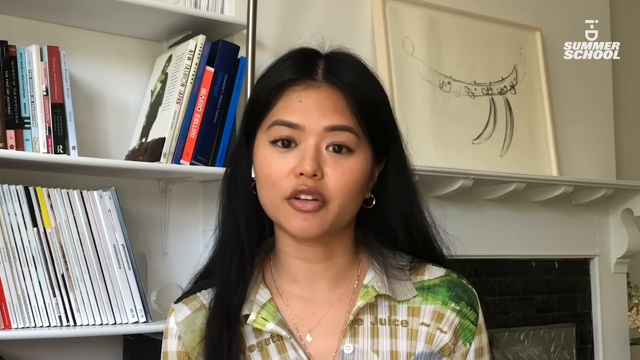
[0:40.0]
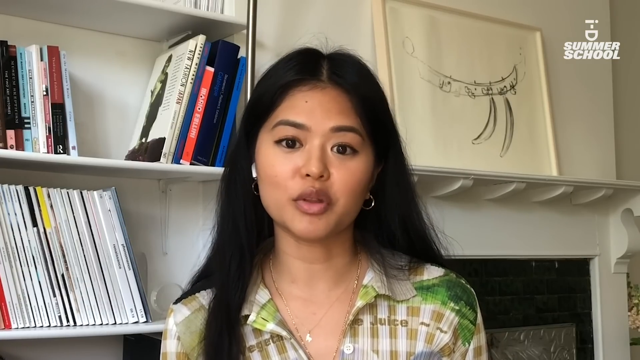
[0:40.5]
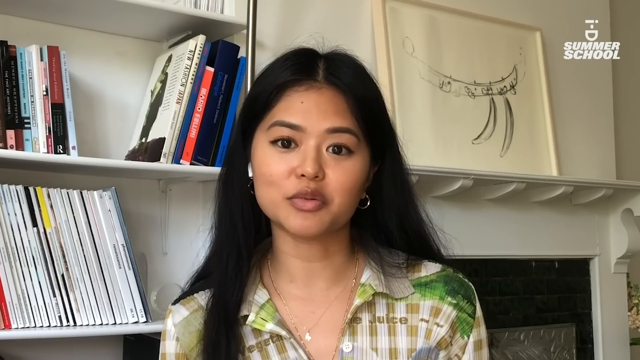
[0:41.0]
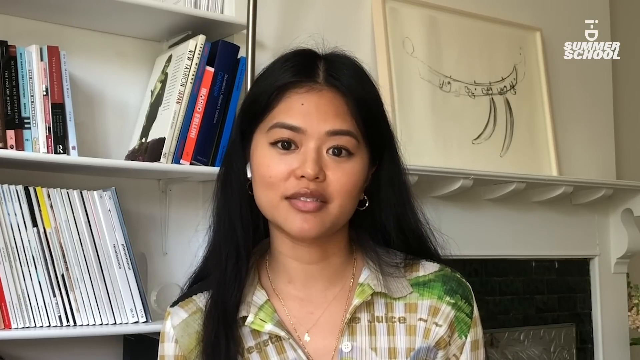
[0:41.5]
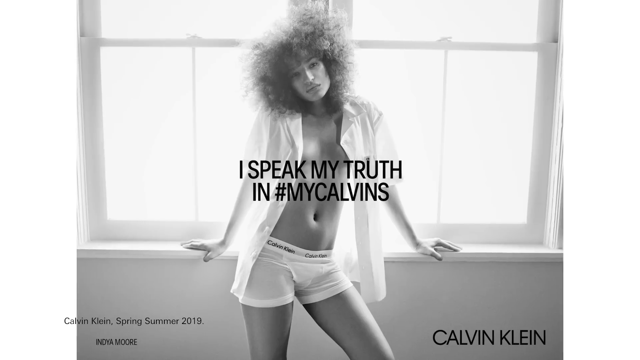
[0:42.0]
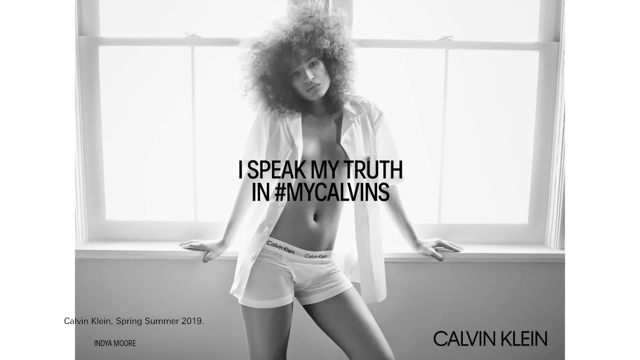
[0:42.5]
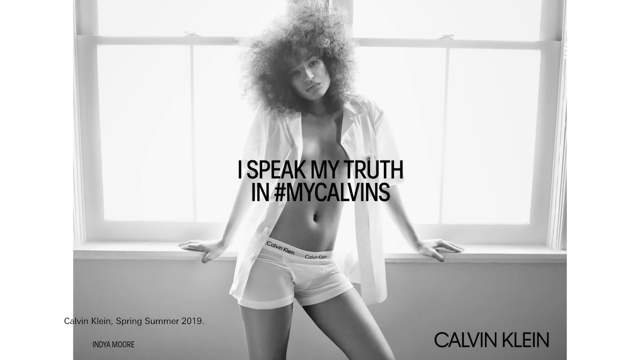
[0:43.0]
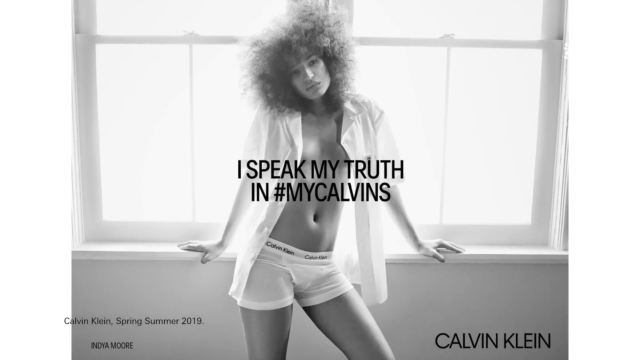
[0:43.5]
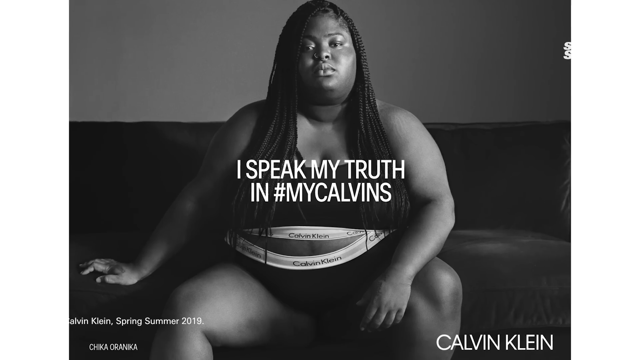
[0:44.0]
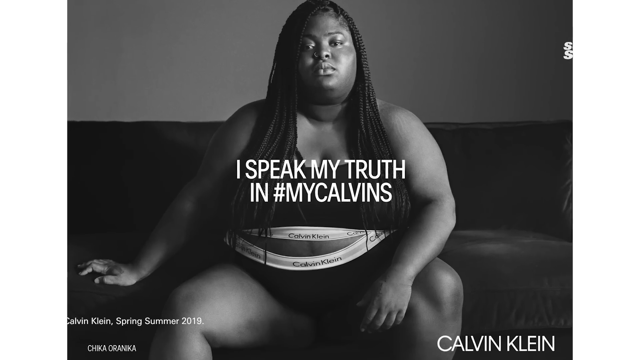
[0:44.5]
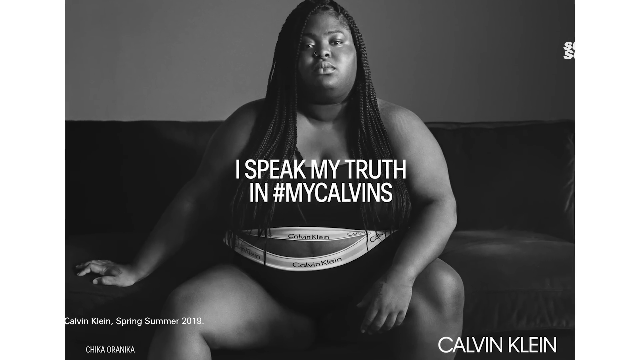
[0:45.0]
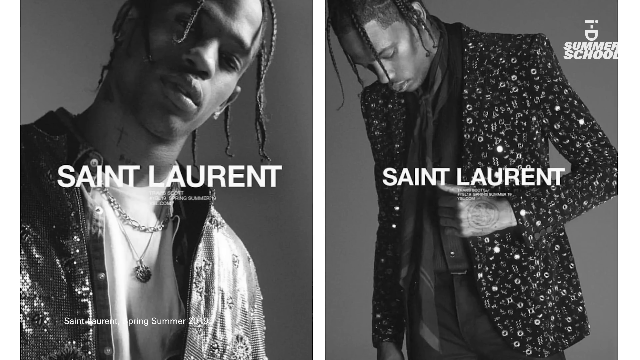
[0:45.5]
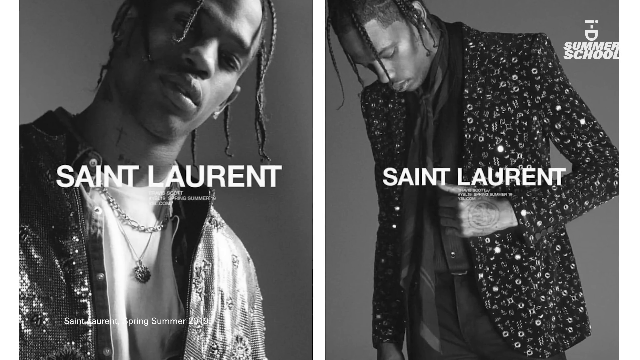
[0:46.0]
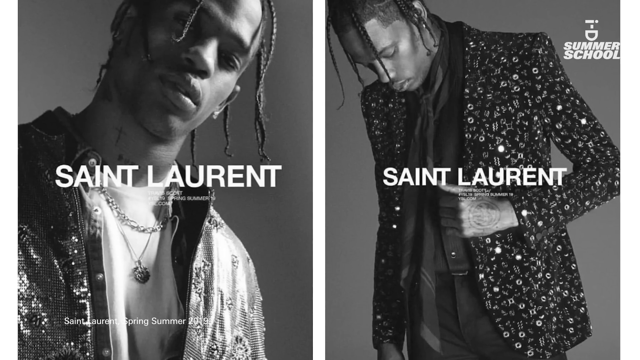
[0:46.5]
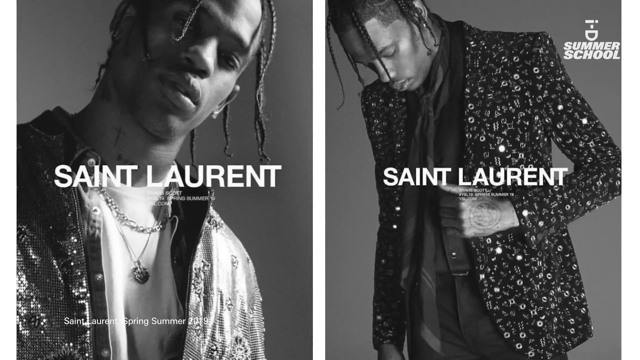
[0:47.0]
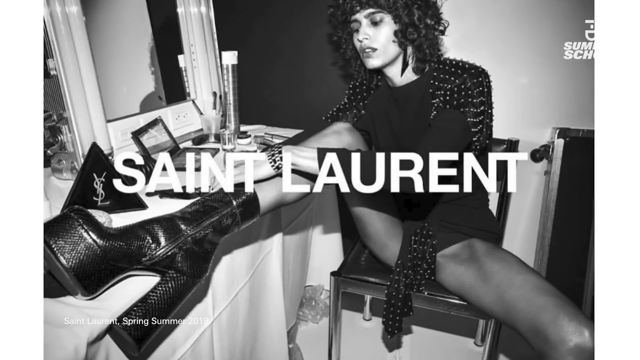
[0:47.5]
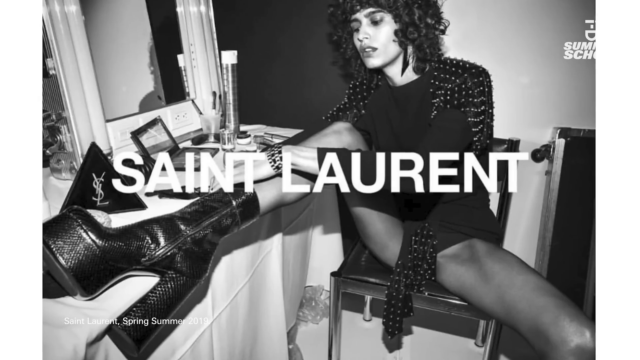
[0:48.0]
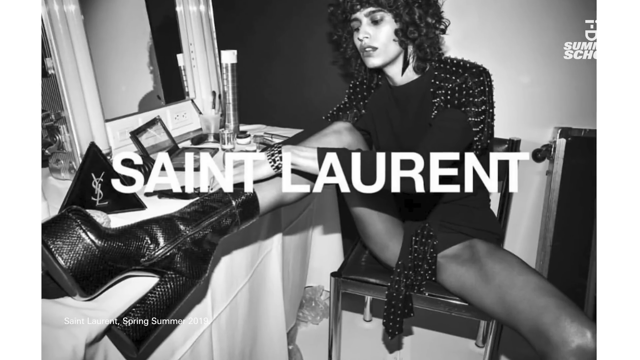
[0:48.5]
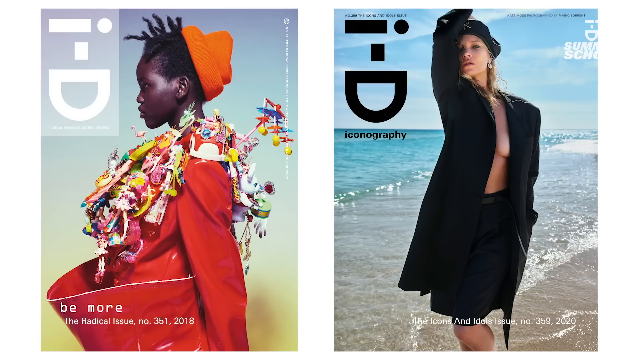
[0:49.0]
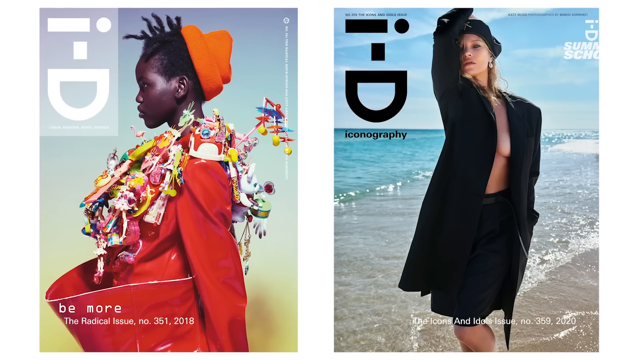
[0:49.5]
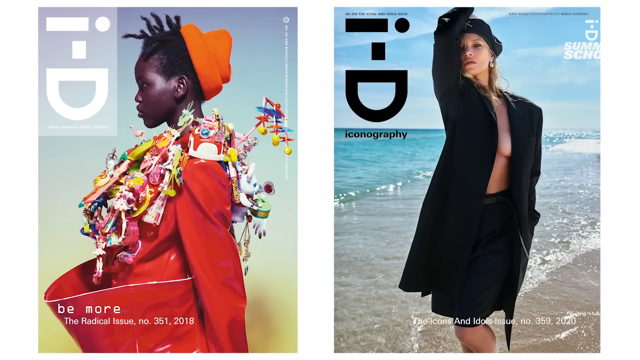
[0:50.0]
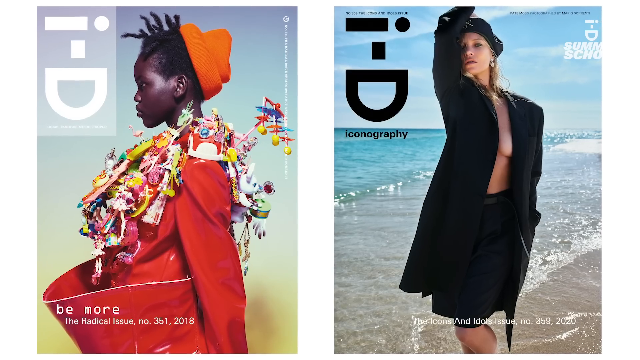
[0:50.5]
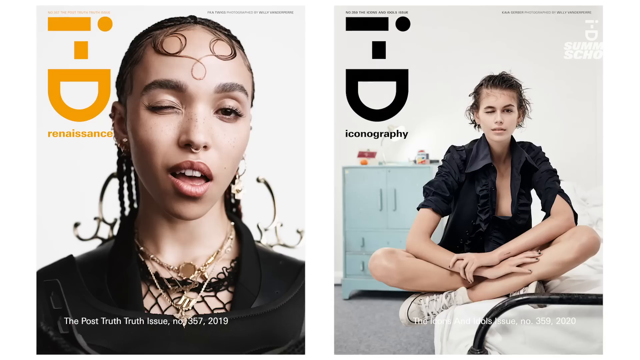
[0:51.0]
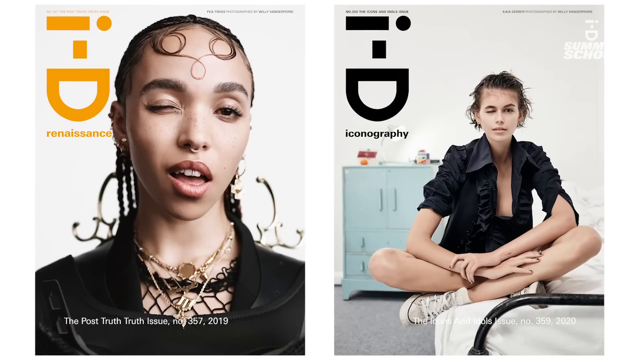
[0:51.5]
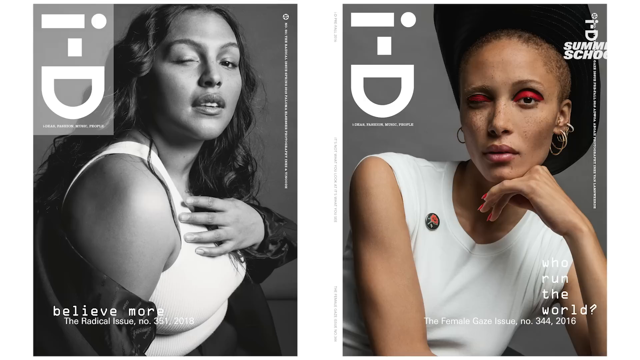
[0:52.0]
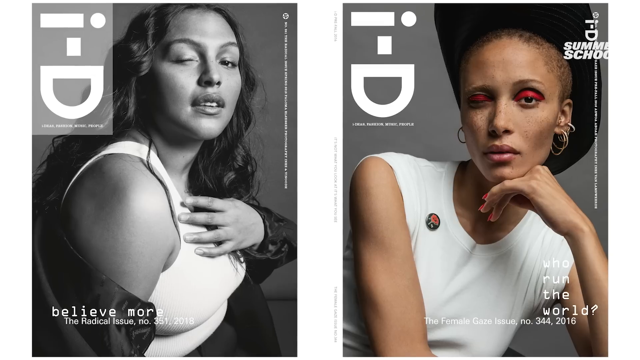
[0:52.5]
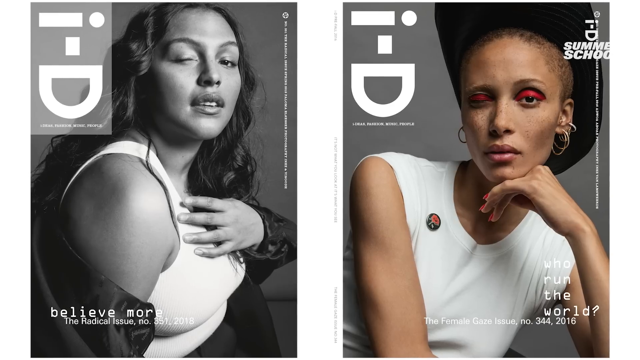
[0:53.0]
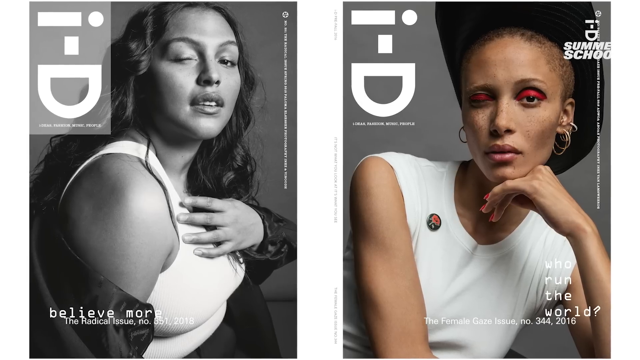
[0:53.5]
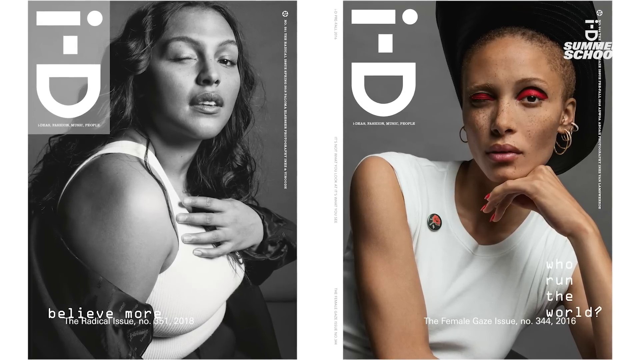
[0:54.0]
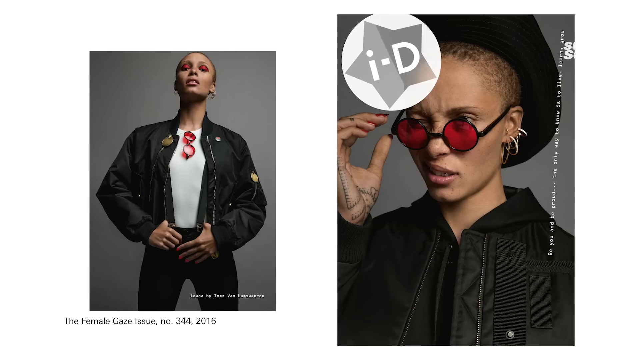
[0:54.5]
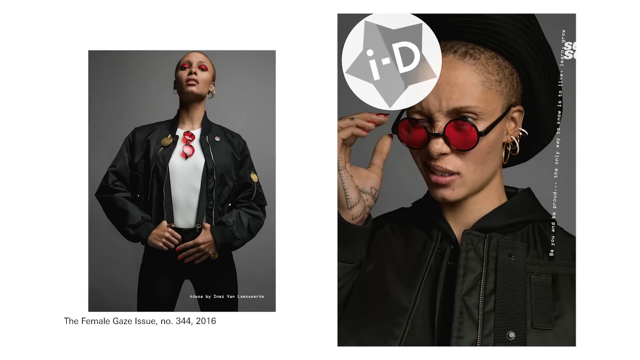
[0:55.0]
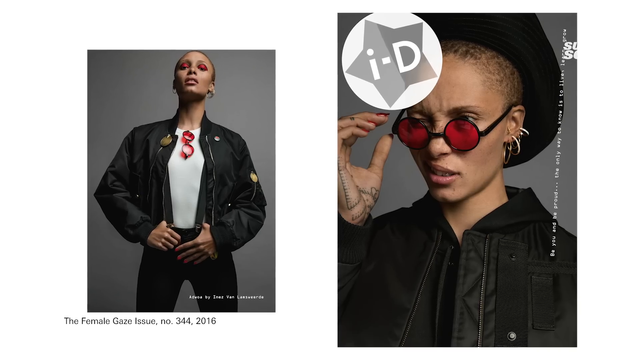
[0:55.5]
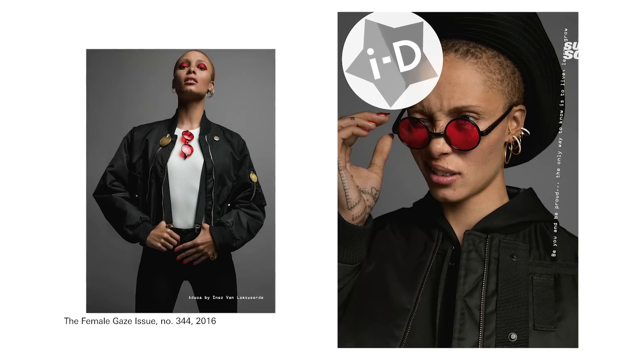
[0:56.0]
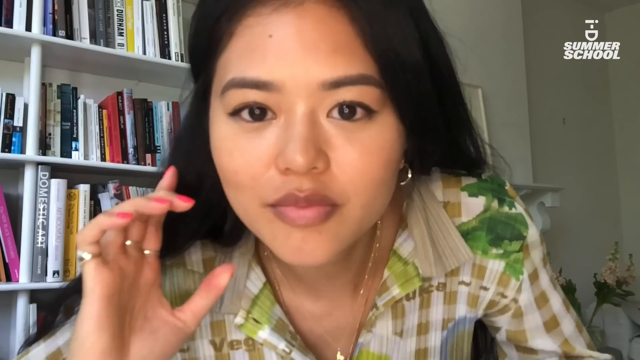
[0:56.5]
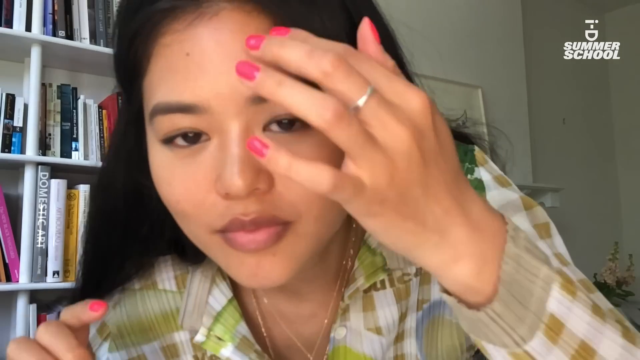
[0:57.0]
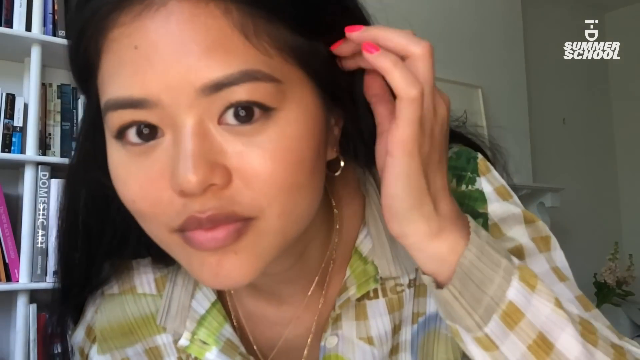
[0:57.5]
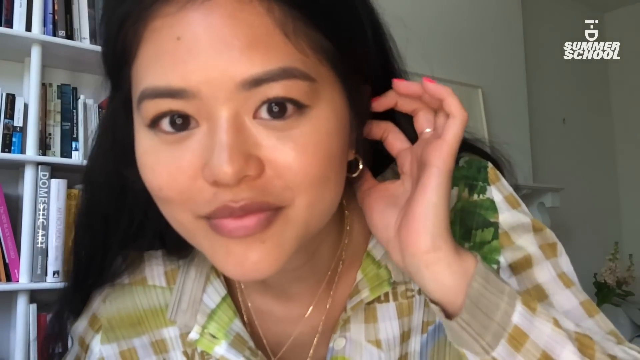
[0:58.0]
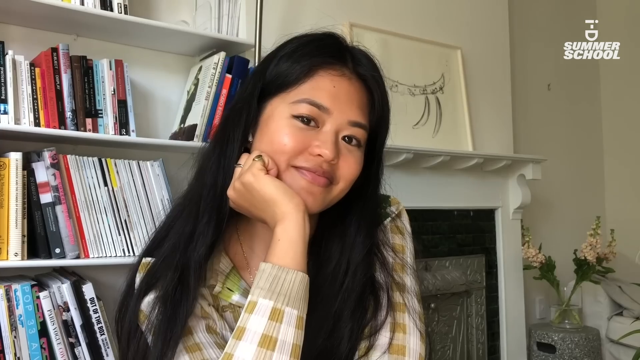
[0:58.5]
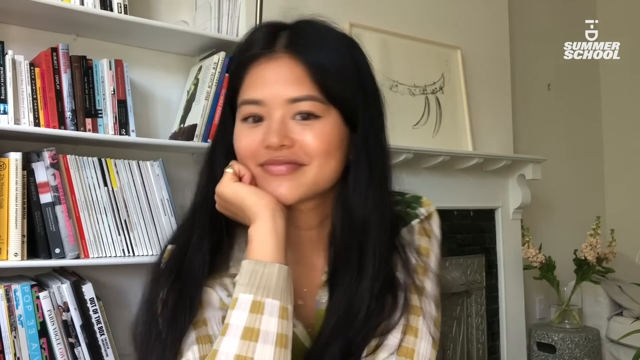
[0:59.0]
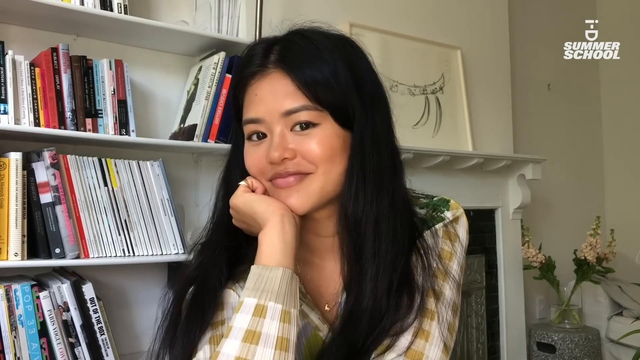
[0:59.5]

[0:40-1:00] A black woman with a big frizzy afro wears an unbuttoned short-sleeve white button-up shirt and a pair of white men's underwear with "Calvin Klein" along the top elastic. She stands in front of a big window, resting both hands on the windowsill. Written in black across the middle of the screen is "I speak my truth and my Calvin's." The video jumps to a still screenshot of a big, heavyset black woman with long braids sitting on a couch, wearing a black tank top and huge black underwear; the words "Calvin Klein" run along the elastic of both, and written in white across the middle of the screen is "I speak my truths in my Calvins." It then cuts to a split screen: on the left, a black man with braids wears a jean jacket over a white shirt, with "St. Lawrence" across the screen; on the right, the same man wears a suit, with "St. Lauren" across the screen.